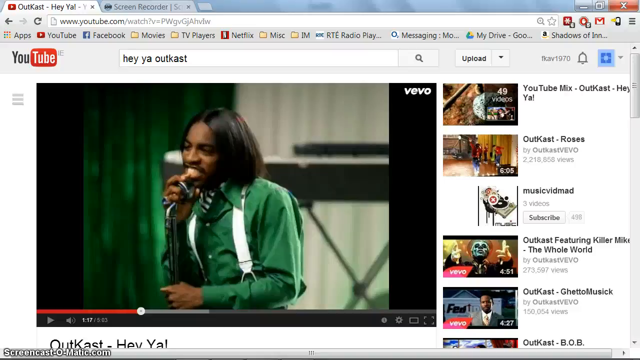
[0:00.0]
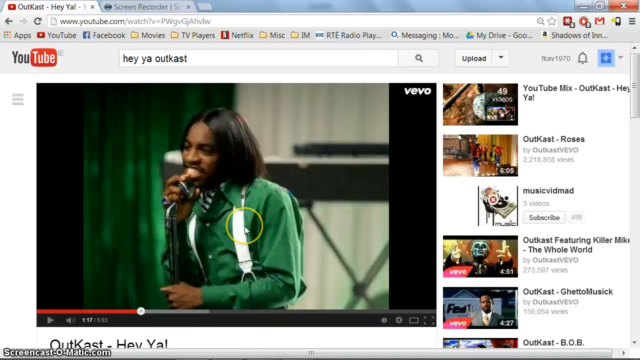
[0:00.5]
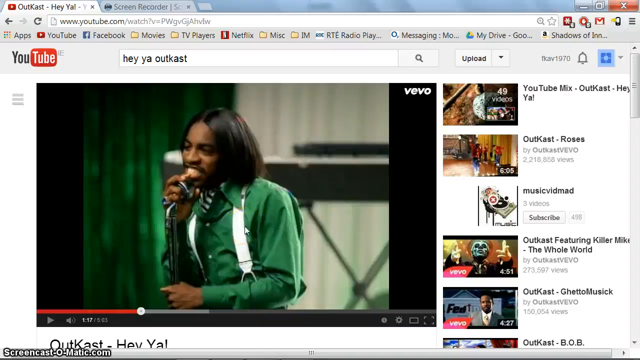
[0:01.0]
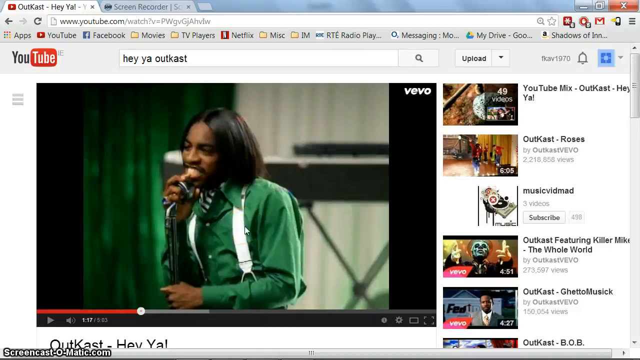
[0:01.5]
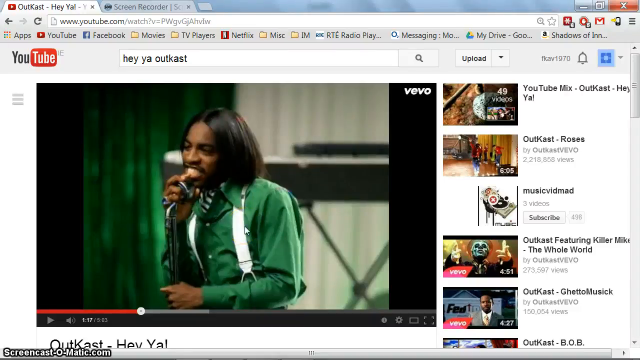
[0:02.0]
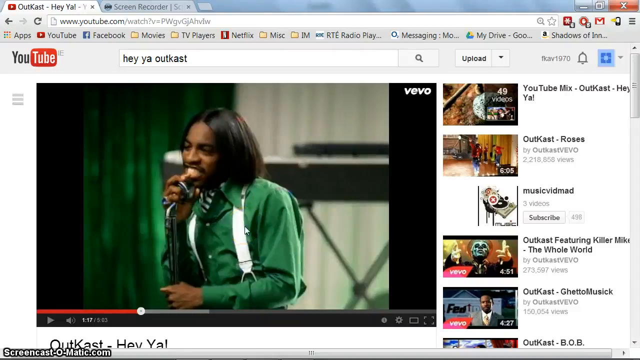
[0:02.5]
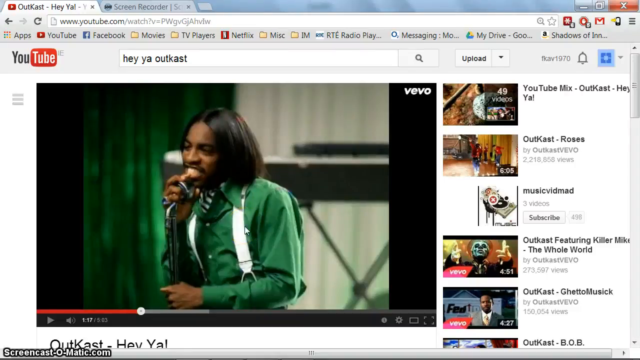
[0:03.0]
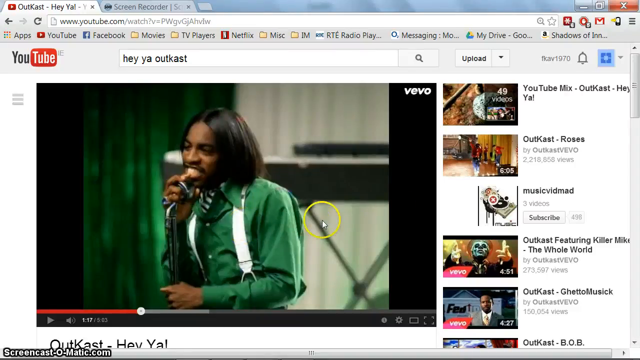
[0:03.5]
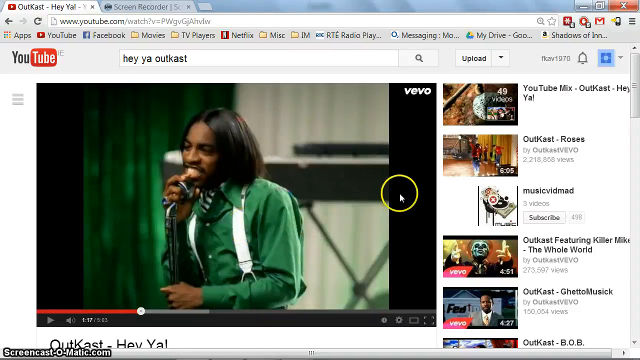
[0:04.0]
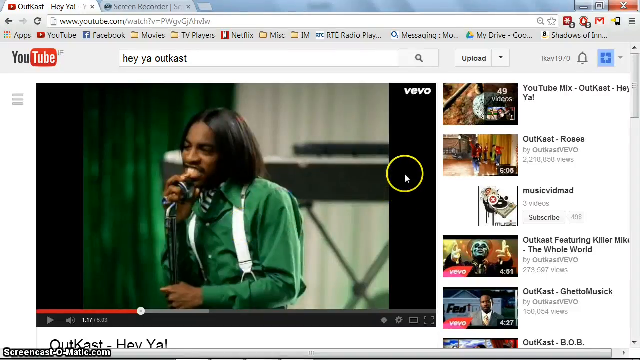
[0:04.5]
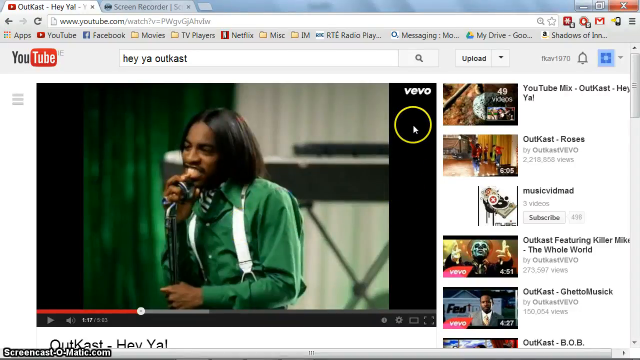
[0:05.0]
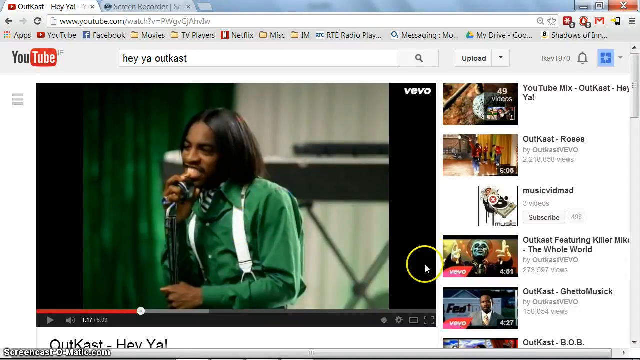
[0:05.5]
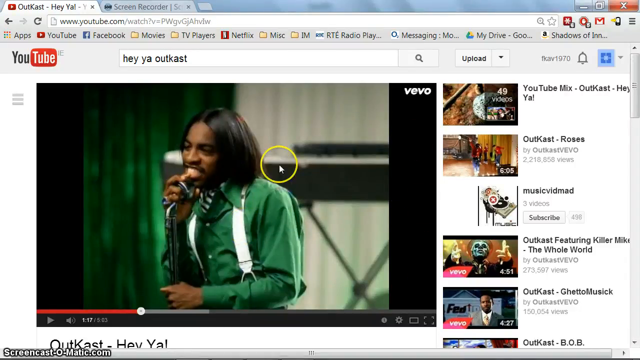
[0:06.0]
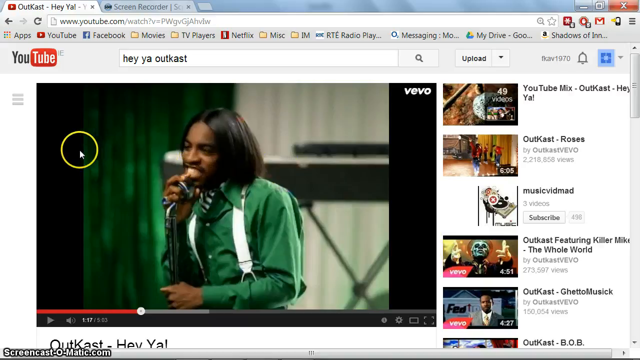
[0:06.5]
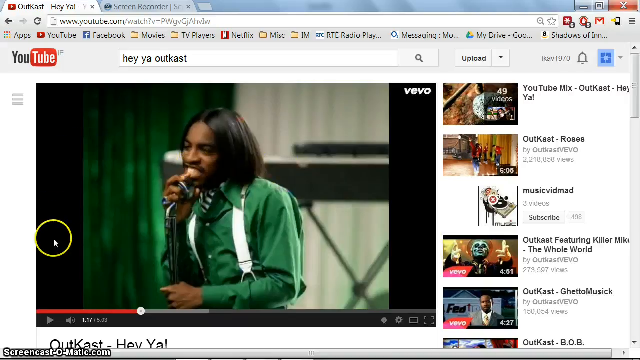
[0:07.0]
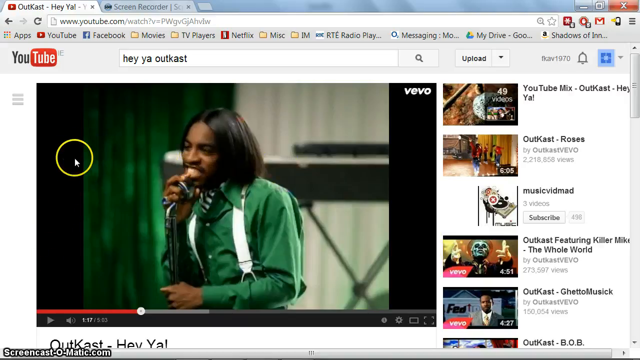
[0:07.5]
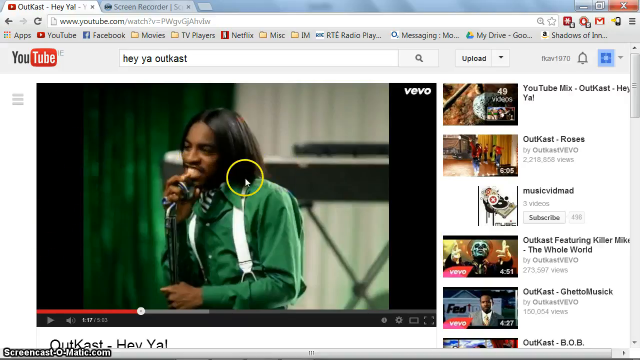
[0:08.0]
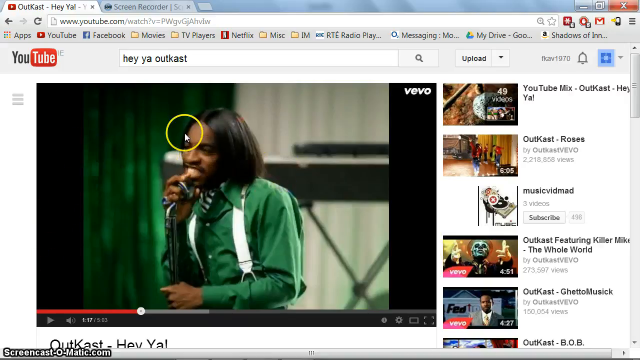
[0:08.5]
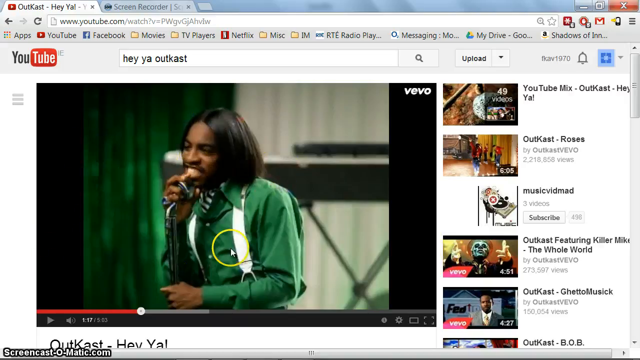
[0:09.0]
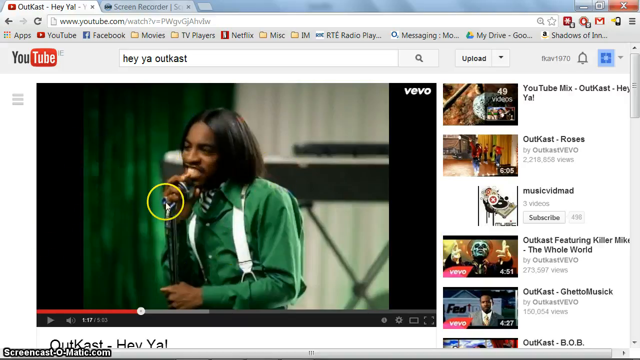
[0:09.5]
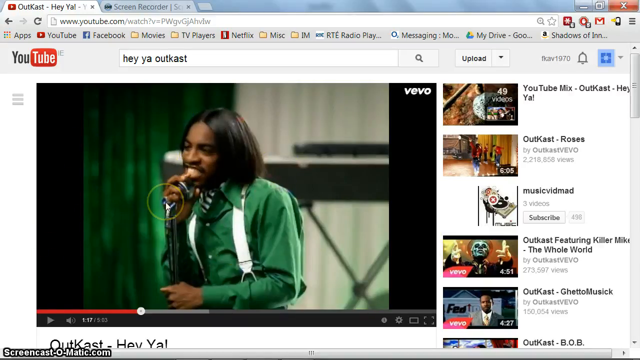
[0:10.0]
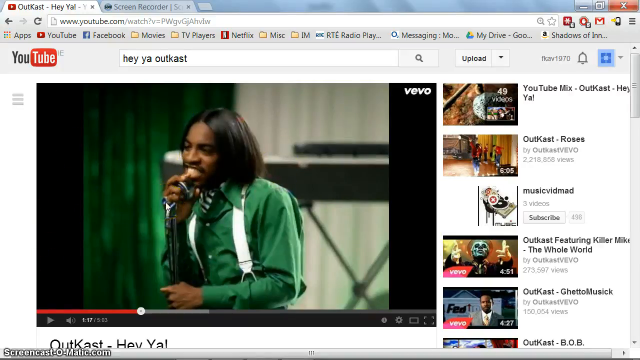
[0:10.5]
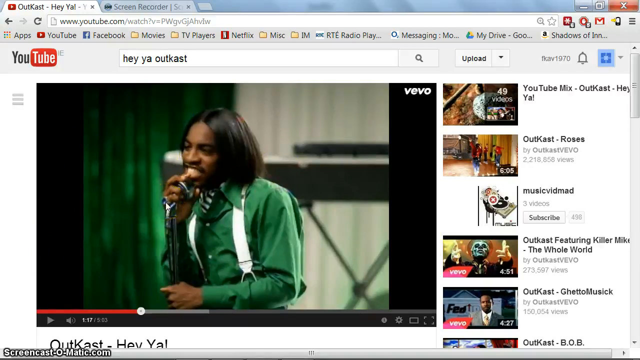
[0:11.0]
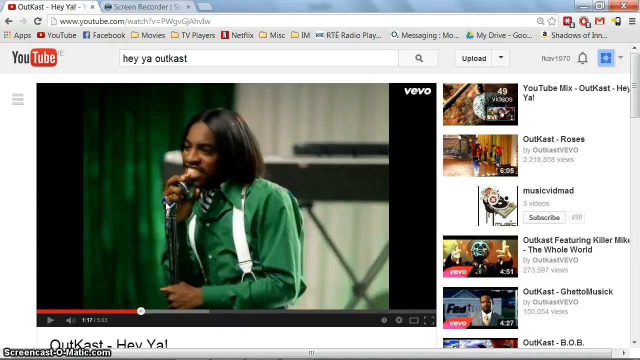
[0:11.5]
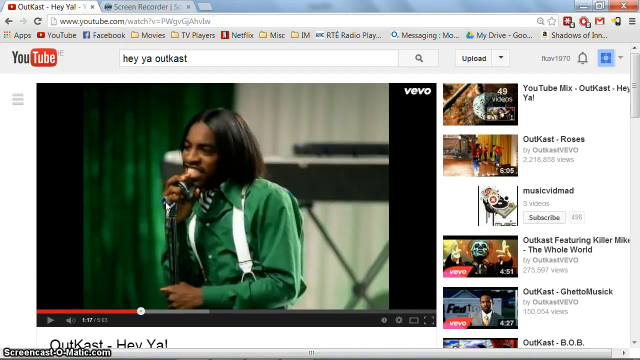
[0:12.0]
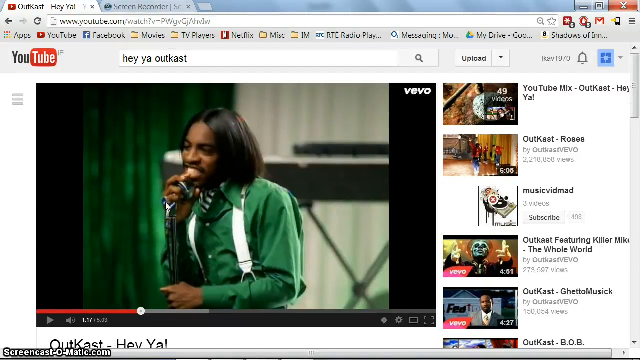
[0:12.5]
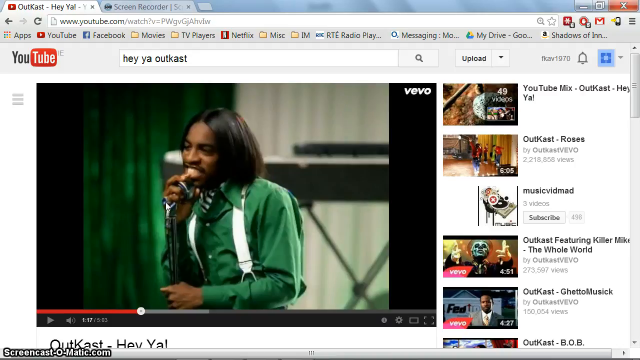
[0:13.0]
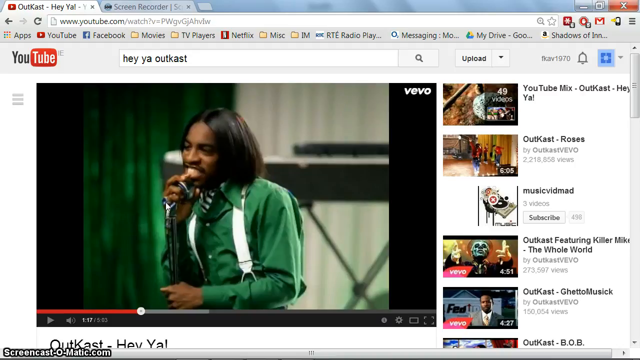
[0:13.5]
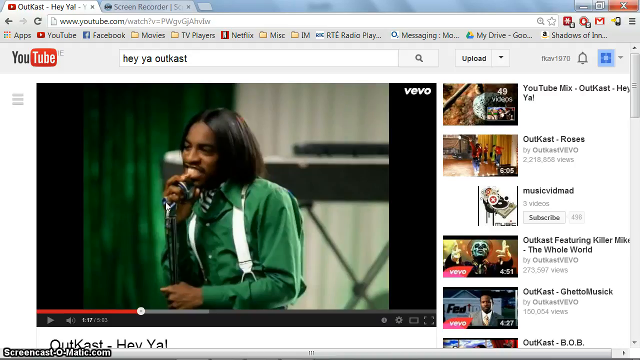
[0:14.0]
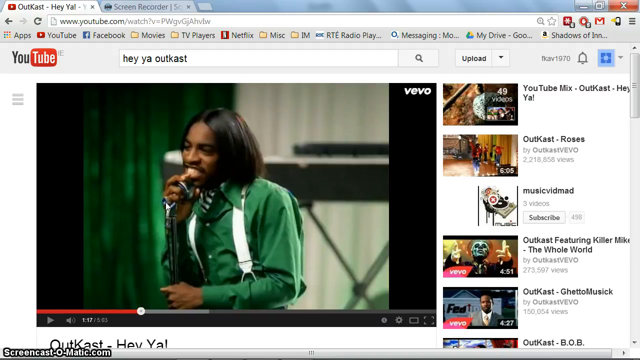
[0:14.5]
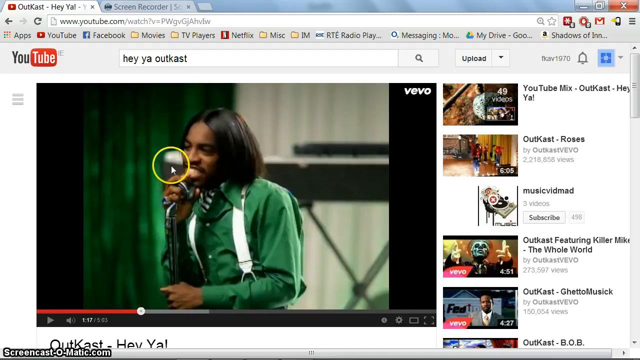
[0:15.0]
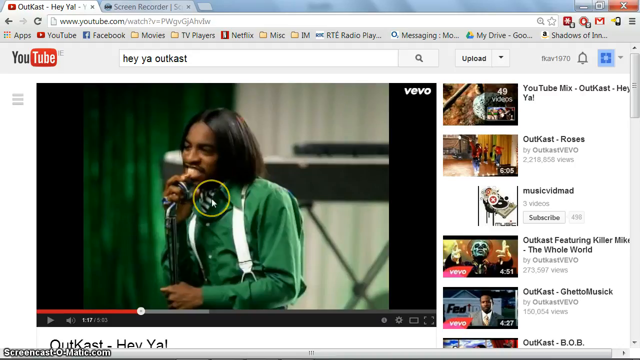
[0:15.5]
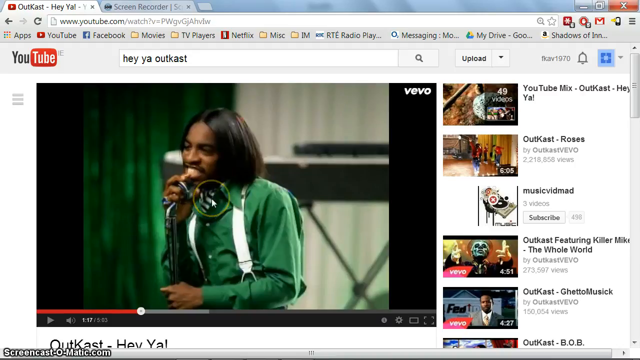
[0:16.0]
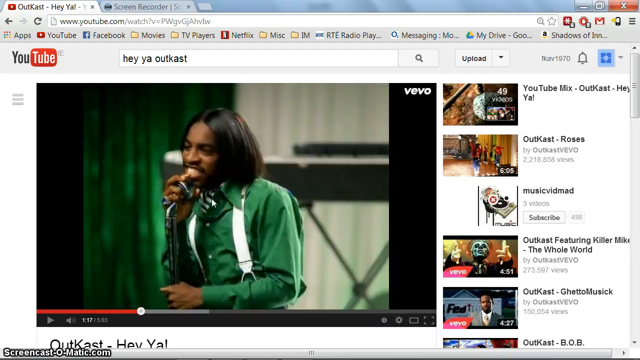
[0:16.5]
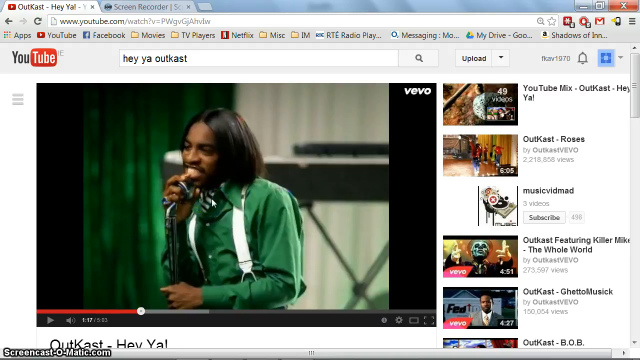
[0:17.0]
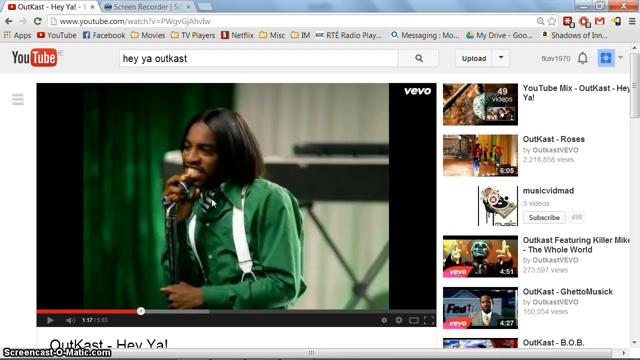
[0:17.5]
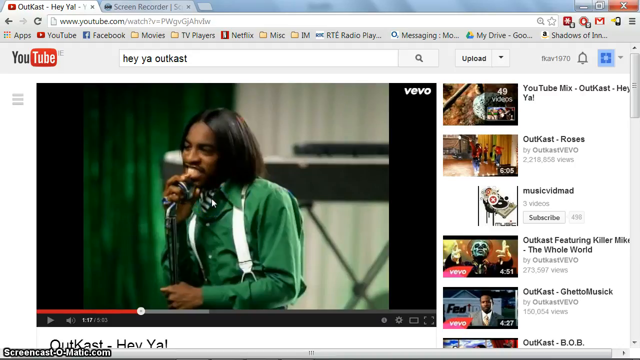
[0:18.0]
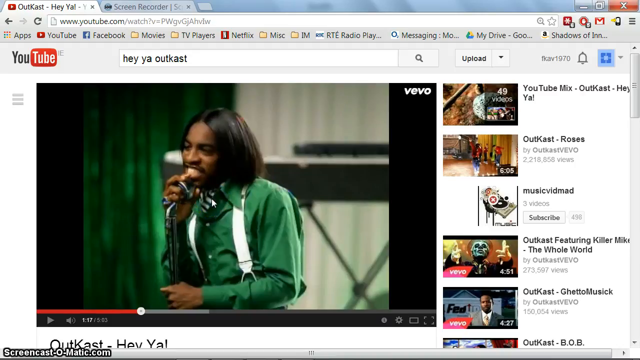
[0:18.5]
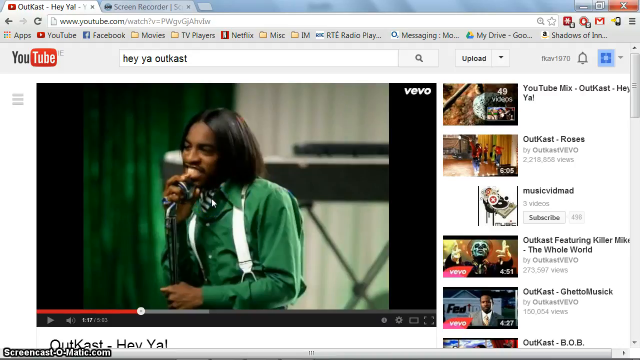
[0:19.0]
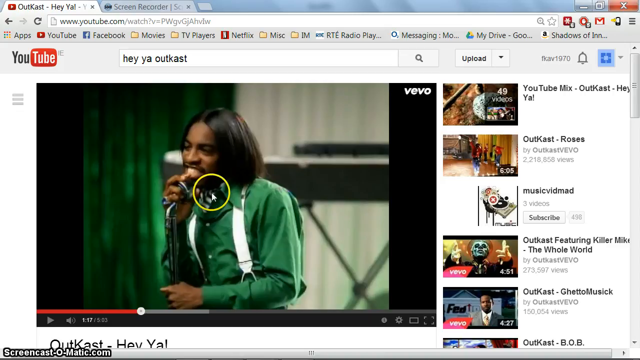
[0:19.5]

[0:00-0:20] The YouTube website is open, and "Hey Y'all Outkast" is typed in the search bar. A yellow circled cursor hovers around the video, at one point over the word "Vevo" in the top right, and then a little over the lead singer's microphone. Two tabs are open: the YouTube tab, and behind it a screen recorder tab. Several suggested videos are listed on the right-hand side: "YouTube Mix for OutKast Hey Ya" at the top, "OutKast Roses" below it, then another video, then "OutKast Featuring Killer Mike The Whole World", and the last one fully visible is "OutKast Ghetto Music".